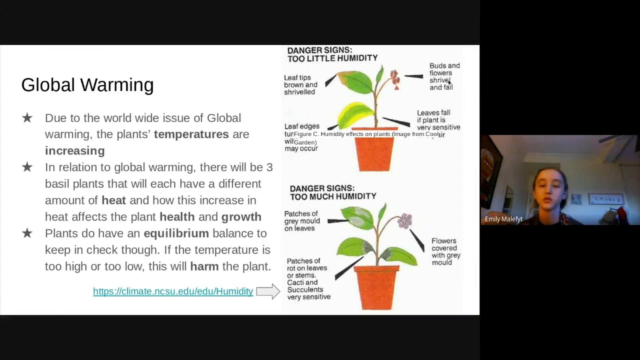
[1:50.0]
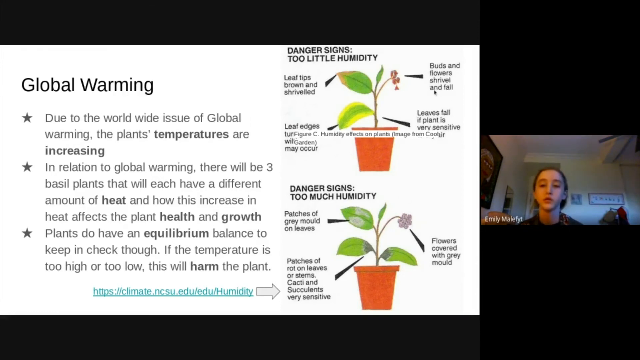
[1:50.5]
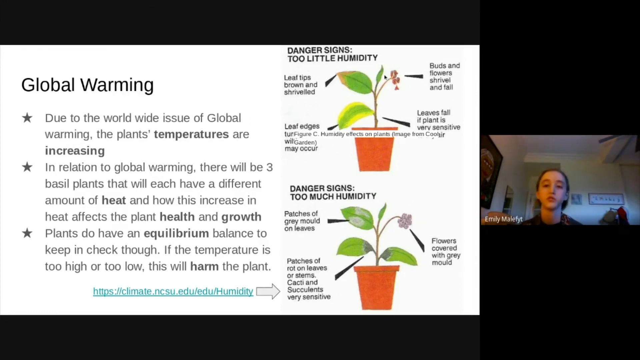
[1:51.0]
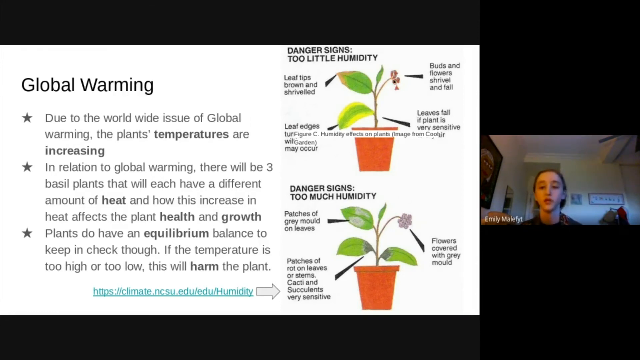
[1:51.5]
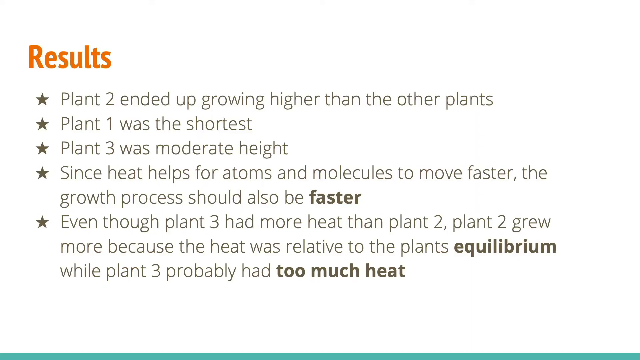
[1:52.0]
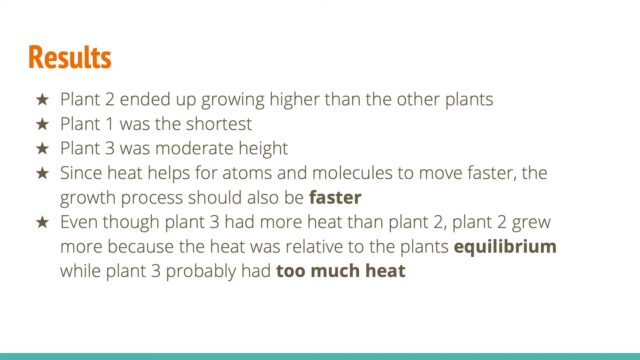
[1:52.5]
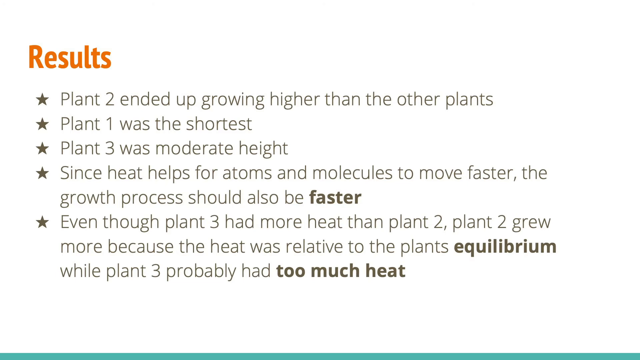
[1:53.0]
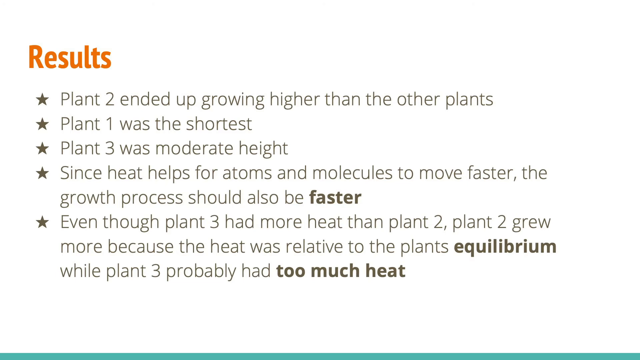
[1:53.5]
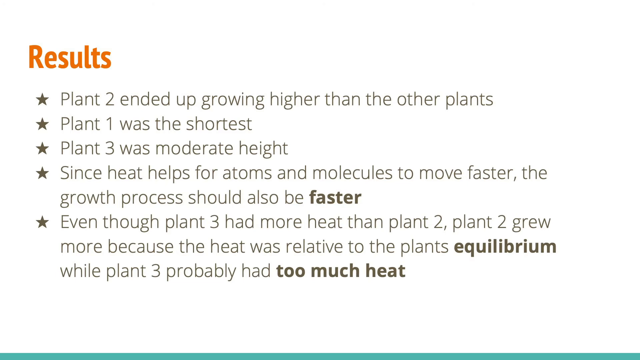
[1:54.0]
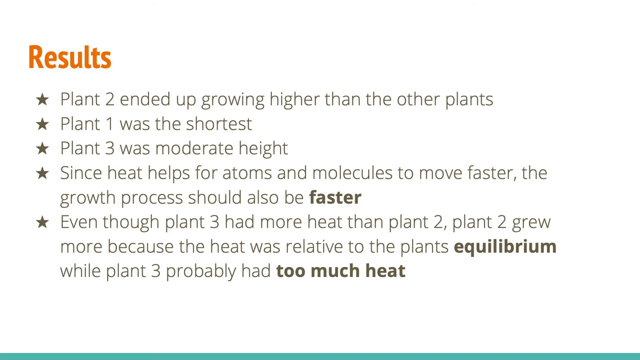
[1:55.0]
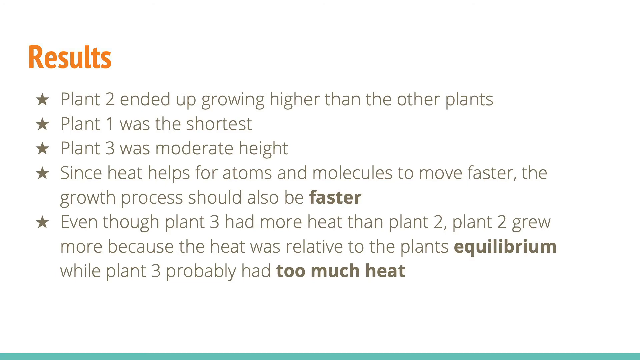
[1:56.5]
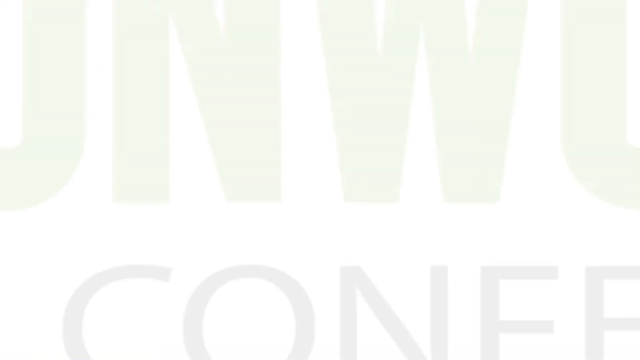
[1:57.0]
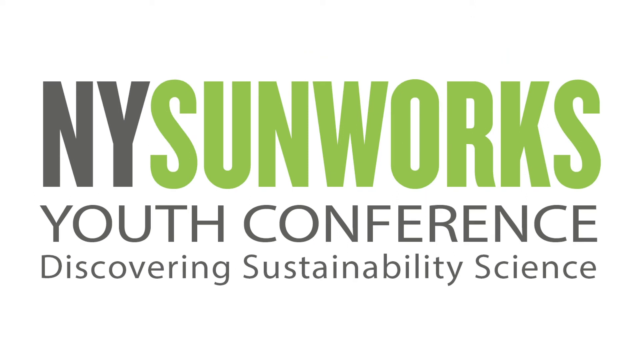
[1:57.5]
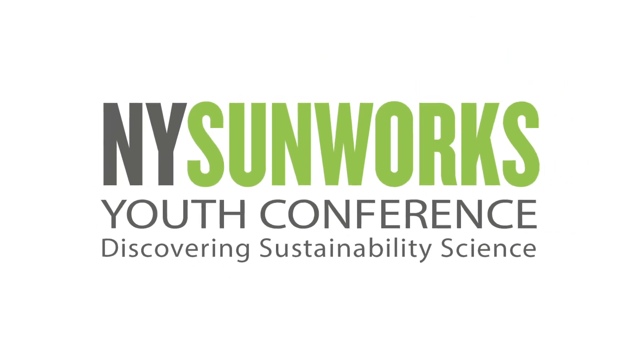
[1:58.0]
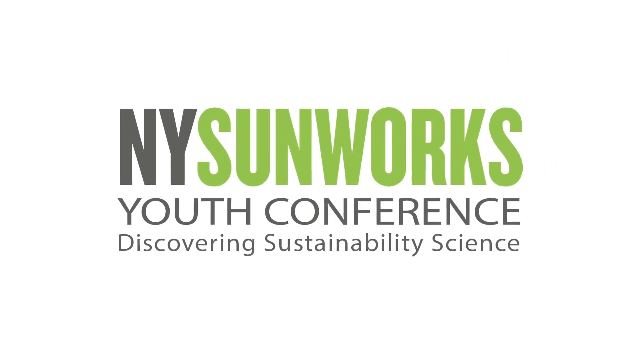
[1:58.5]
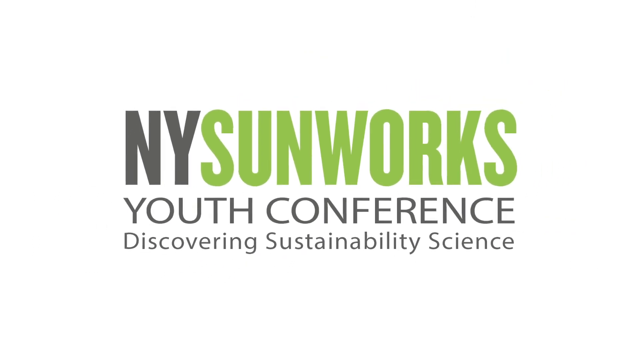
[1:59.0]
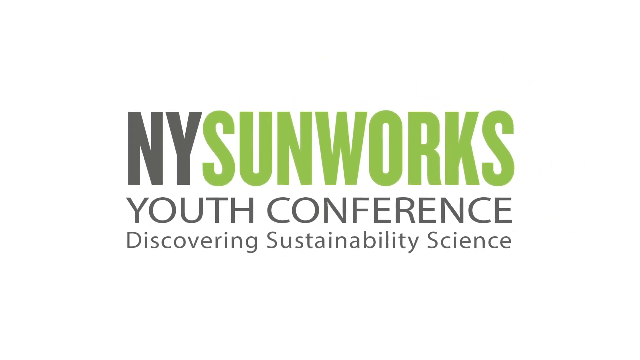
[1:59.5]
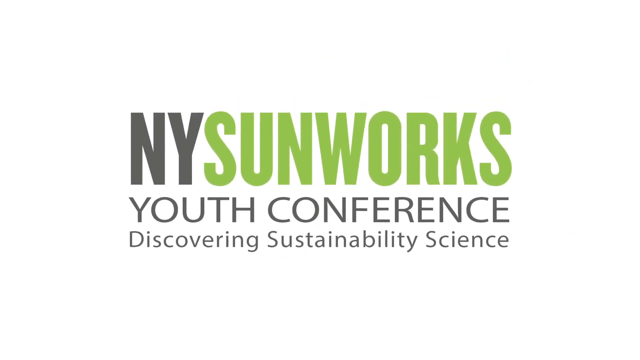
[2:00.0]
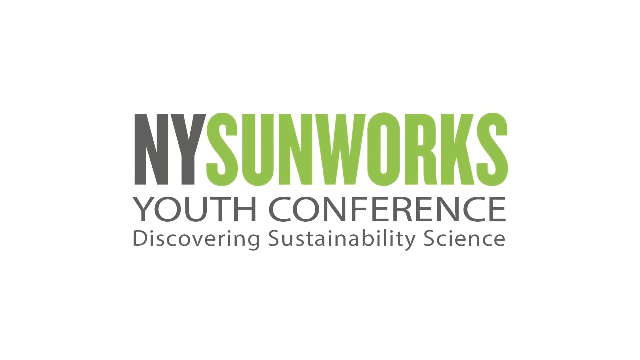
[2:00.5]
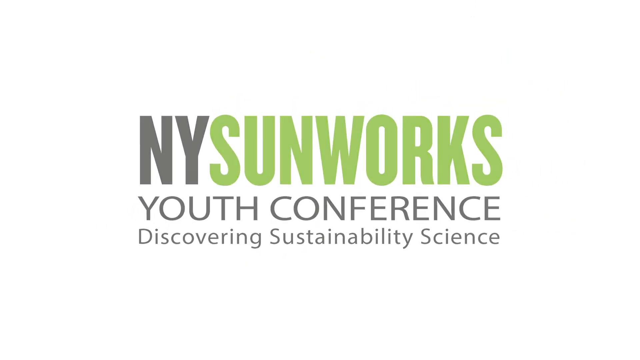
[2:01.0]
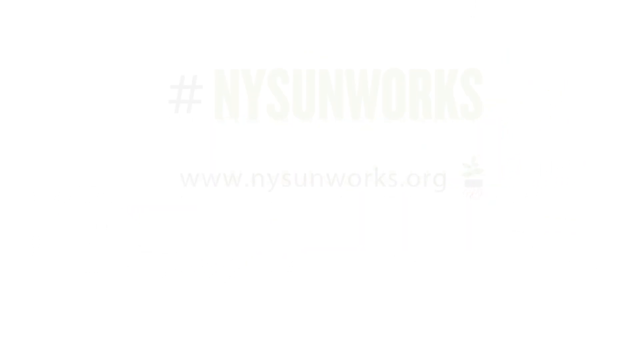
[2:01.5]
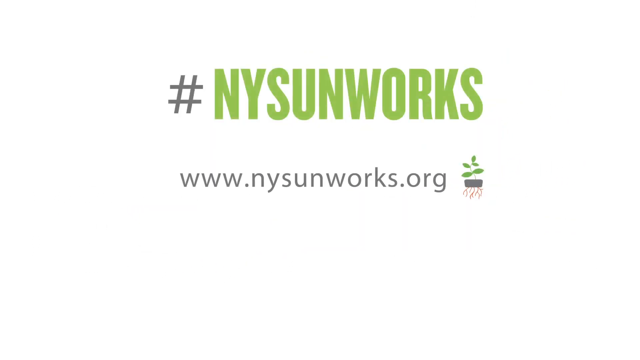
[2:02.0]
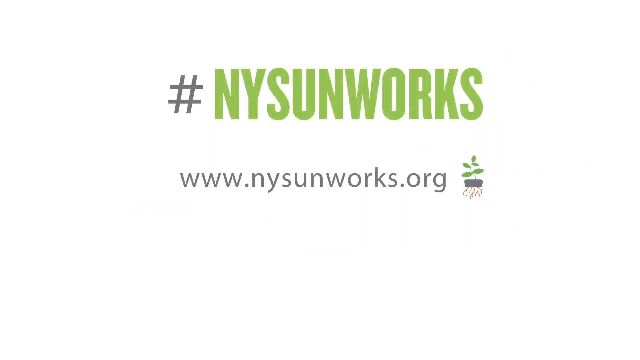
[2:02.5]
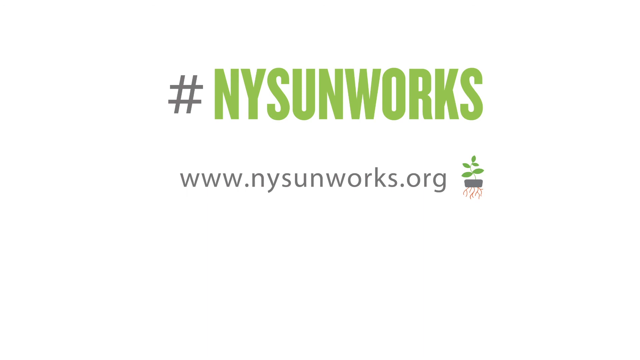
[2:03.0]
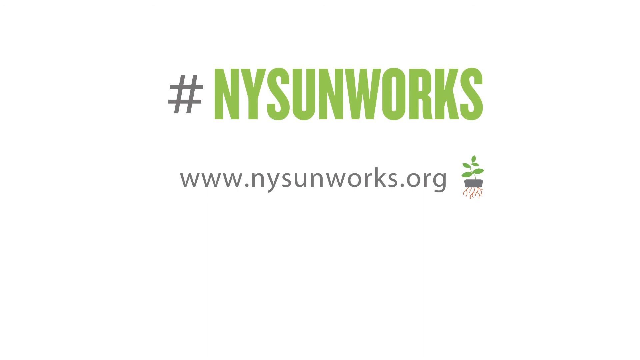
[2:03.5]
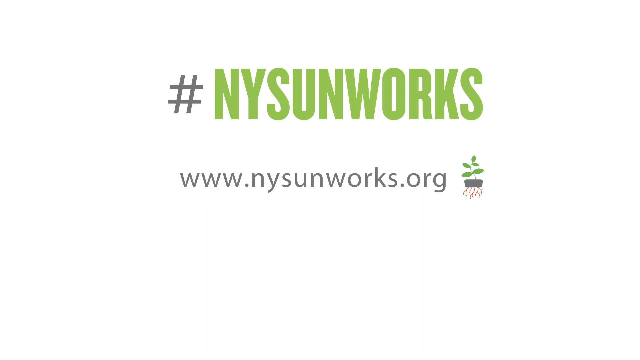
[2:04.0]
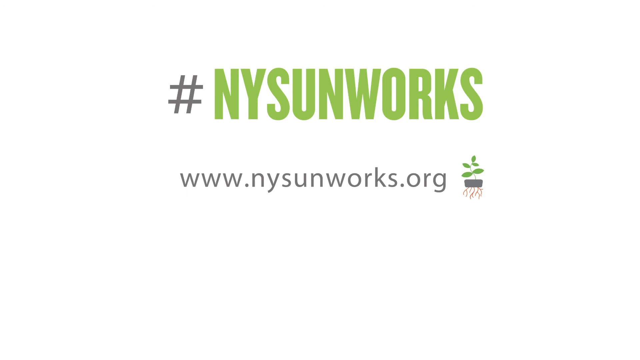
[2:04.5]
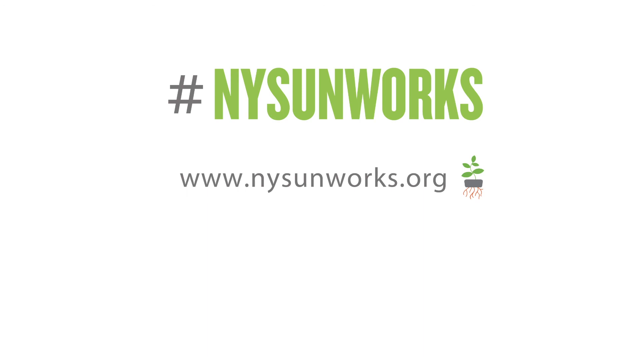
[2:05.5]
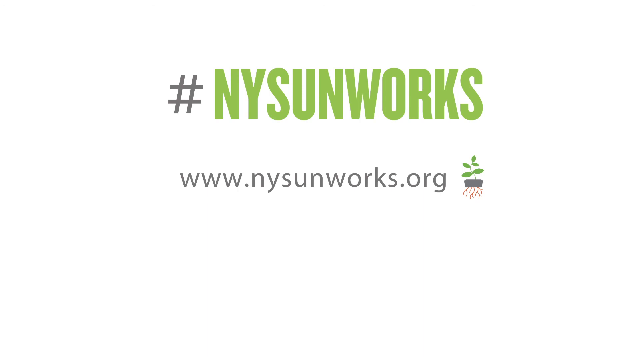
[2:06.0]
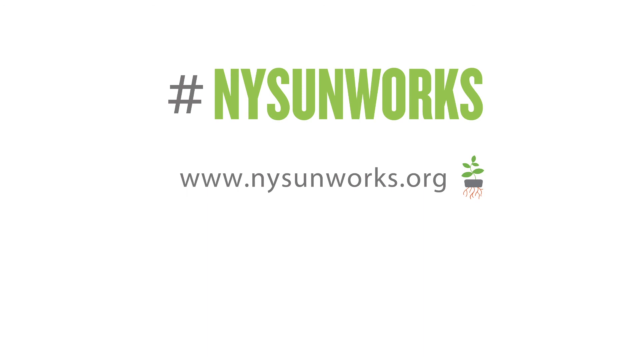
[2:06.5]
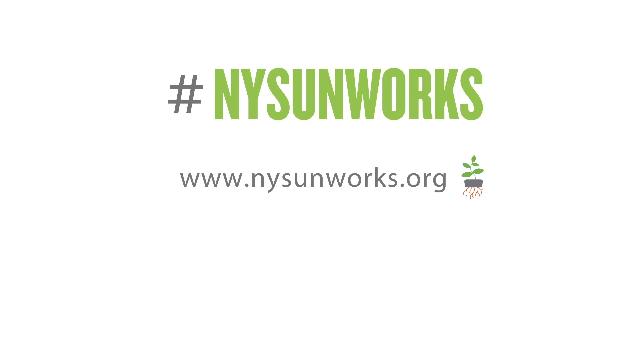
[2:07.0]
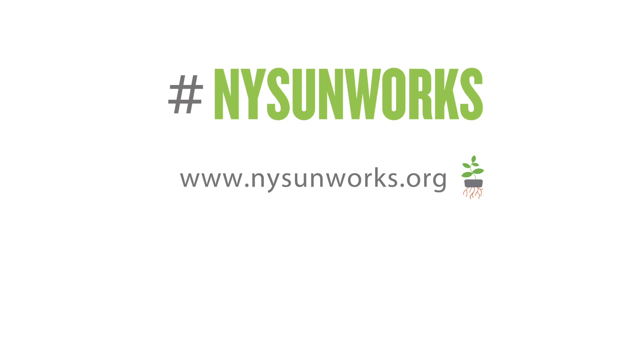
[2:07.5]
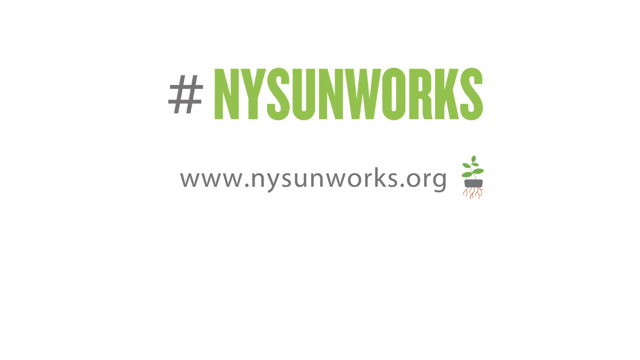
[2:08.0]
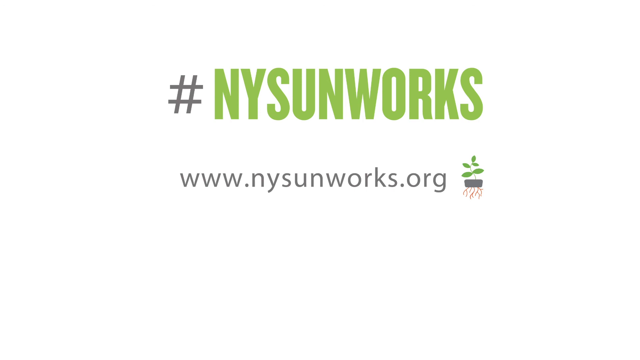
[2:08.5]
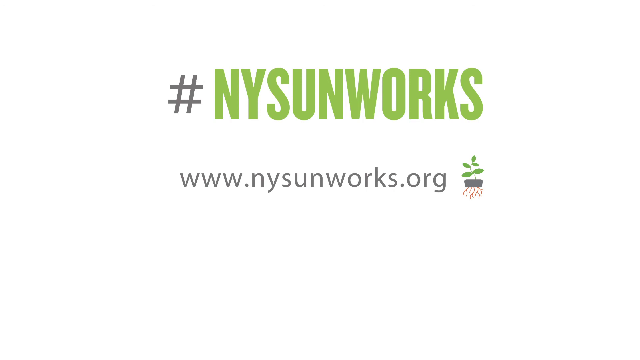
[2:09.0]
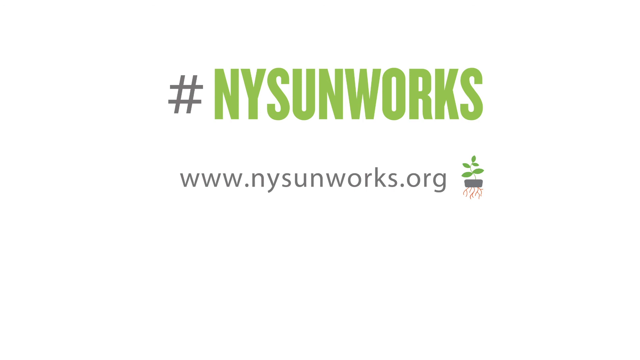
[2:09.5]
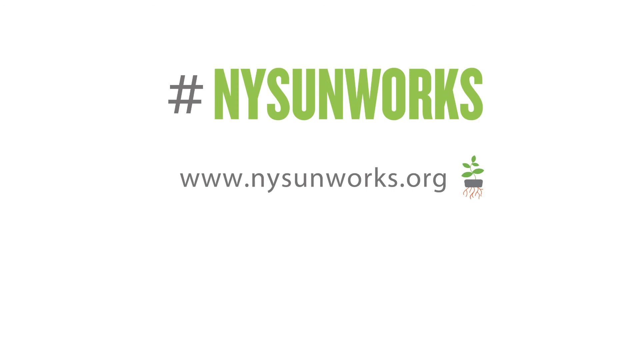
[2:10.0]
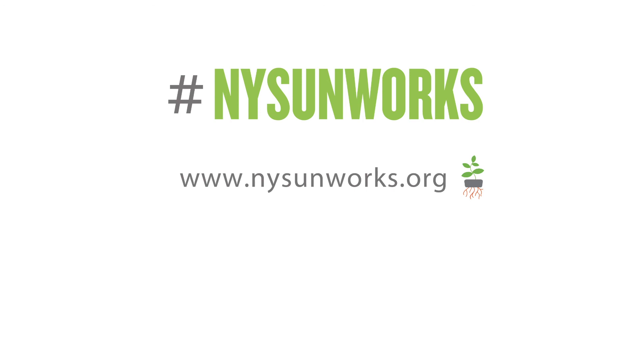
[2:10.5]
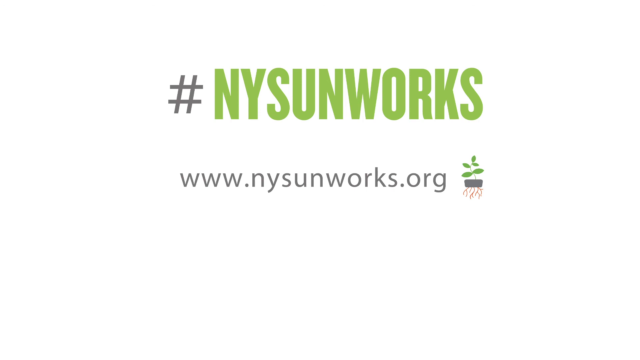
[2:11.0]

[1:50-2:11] The global warming slide remains while Emily keeps speaking. After a few seconds, a new slide appears titled "Results" in orange at the top right, with star bullet points reading: "Plant 2 ended up growing higher than the other plants," "Plant 1 was the shortest," "Plant 3 was moderate height," "since heat helps for atoms and molecules to move faster, the growth process should also be faster," and "even though Plant 3 had more heat than Plant 2, Plant 2 grew more because the heat was relative to the plant's equilibrium, while Plant 3 probably had too much heat." This fades away, the same opening screen with NY Sunworks Youth Conference appears in the middle, and the last screen is white with a hashtag and, in green, "NY Sunworks," with "nysunworks.org" below. To the right of the website is a tiny plant icon with a gray base and reddish-brown roots coming from the bottom.